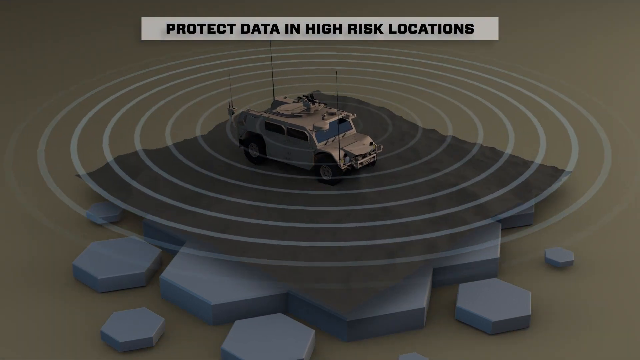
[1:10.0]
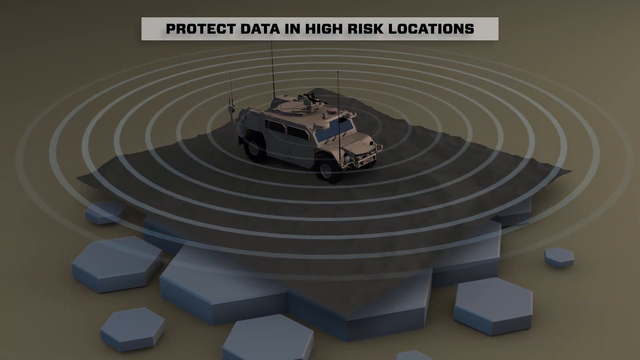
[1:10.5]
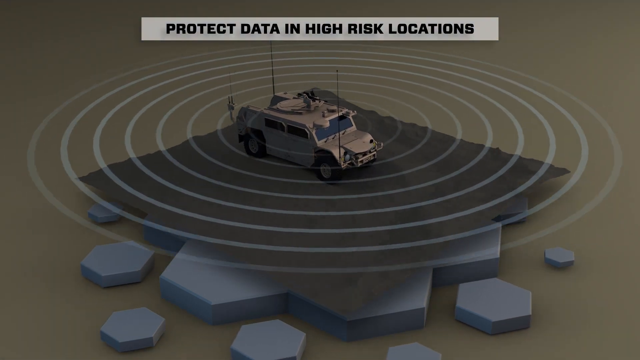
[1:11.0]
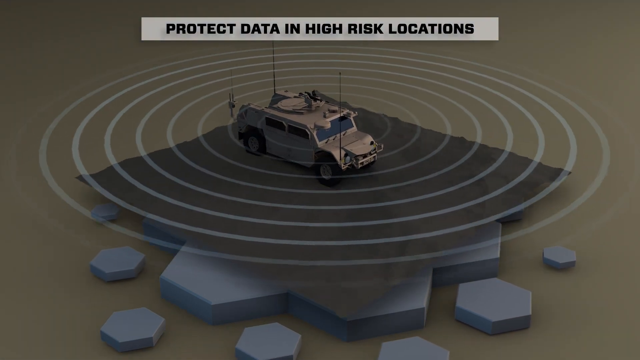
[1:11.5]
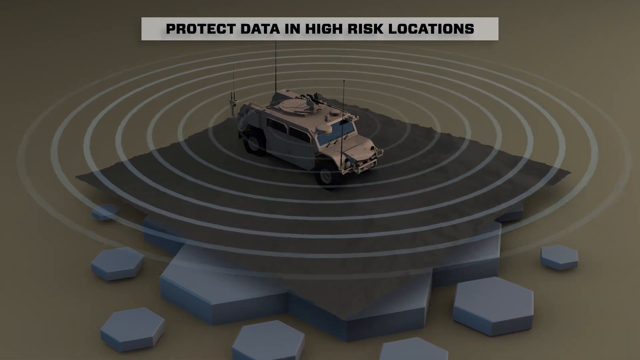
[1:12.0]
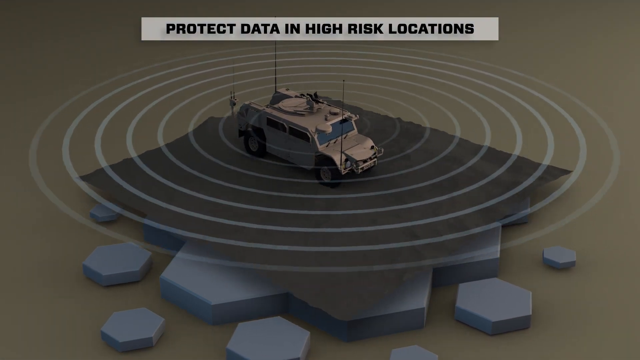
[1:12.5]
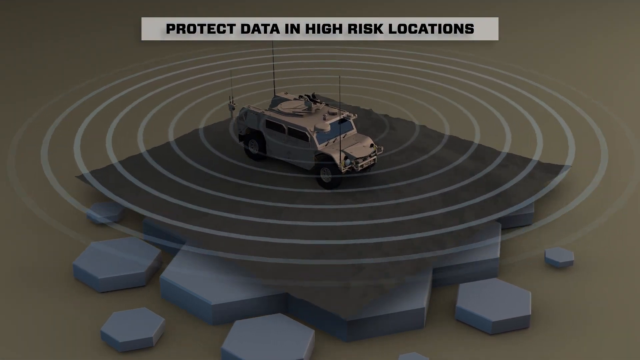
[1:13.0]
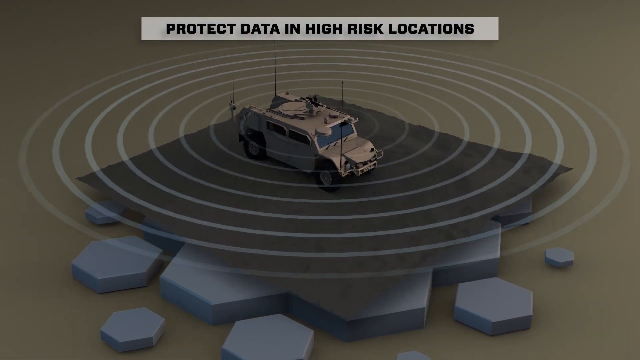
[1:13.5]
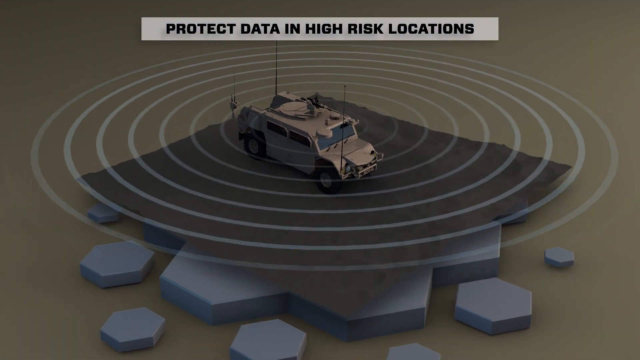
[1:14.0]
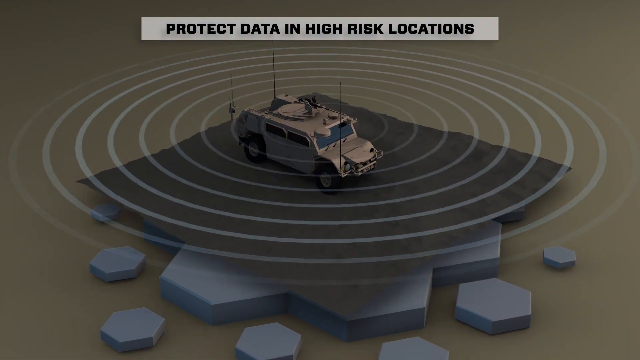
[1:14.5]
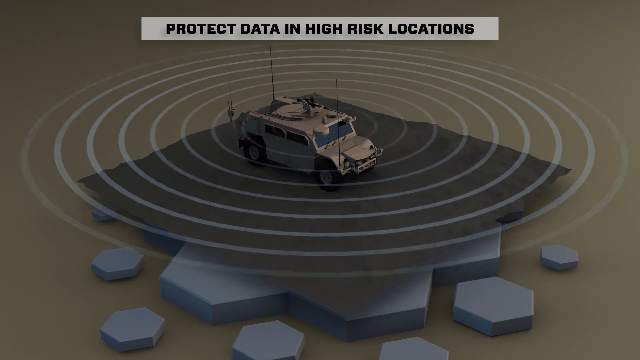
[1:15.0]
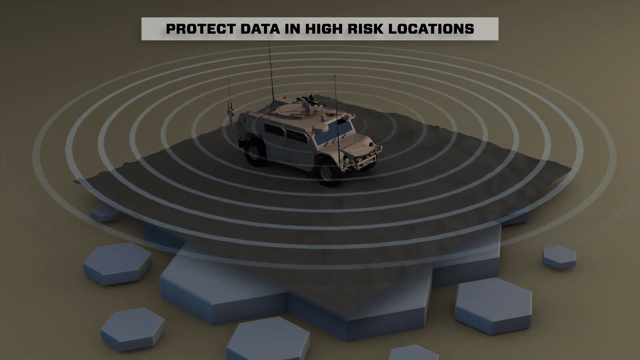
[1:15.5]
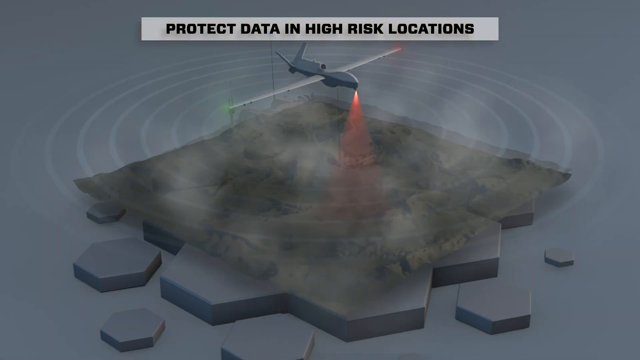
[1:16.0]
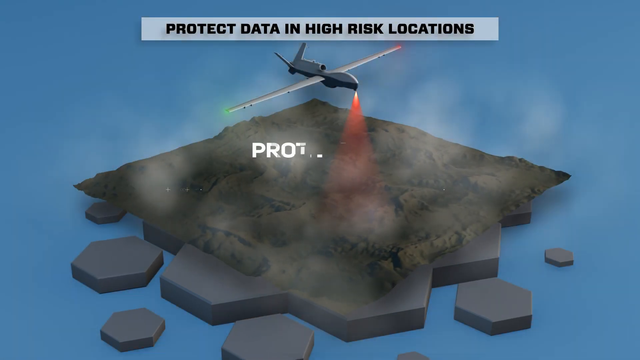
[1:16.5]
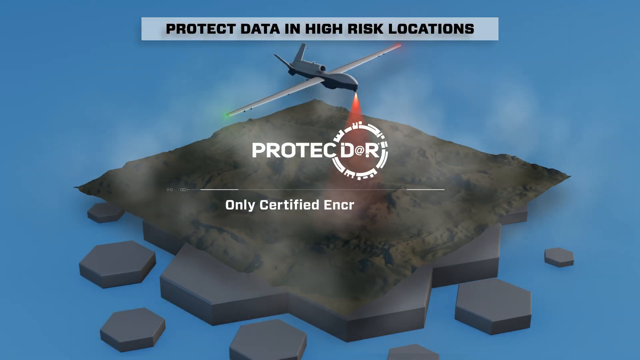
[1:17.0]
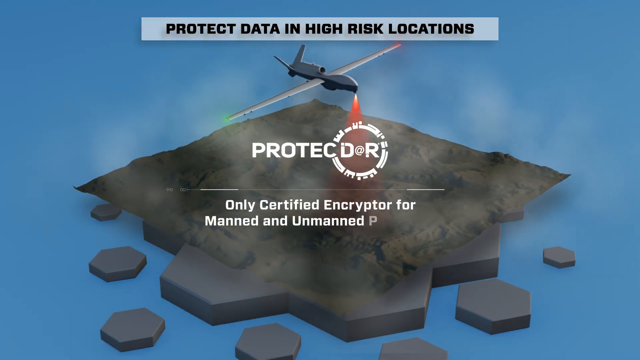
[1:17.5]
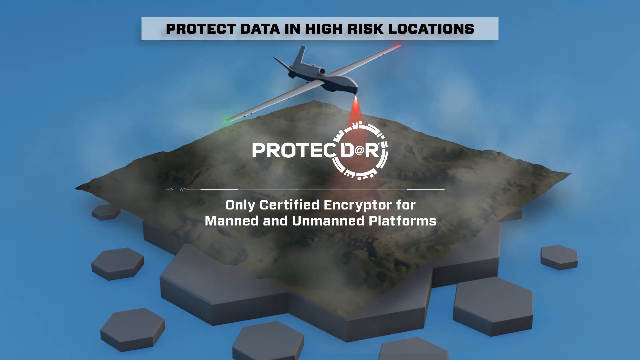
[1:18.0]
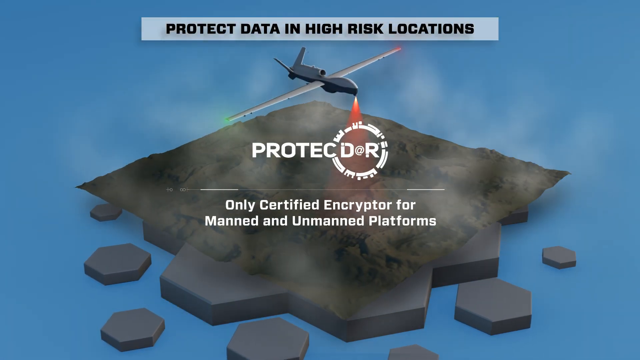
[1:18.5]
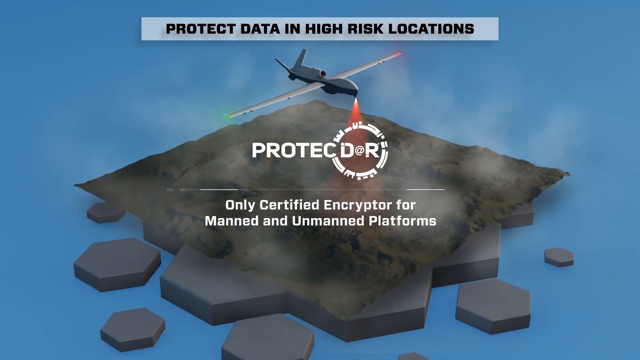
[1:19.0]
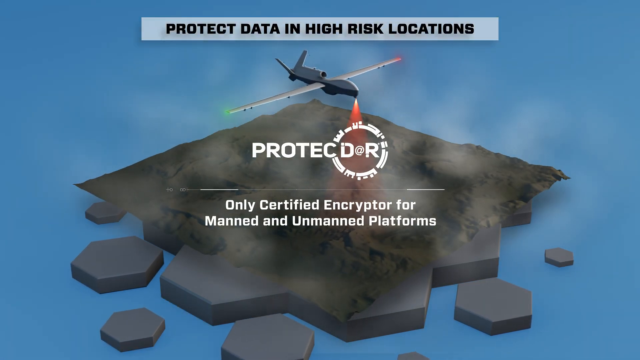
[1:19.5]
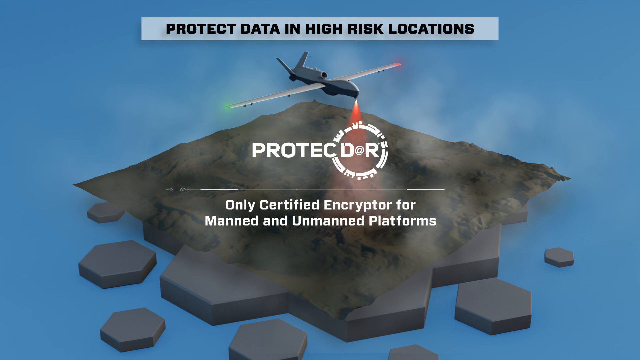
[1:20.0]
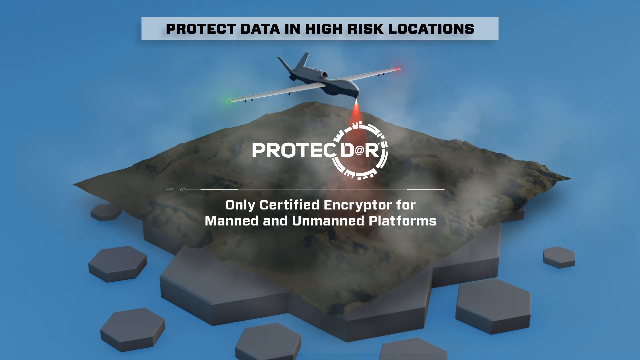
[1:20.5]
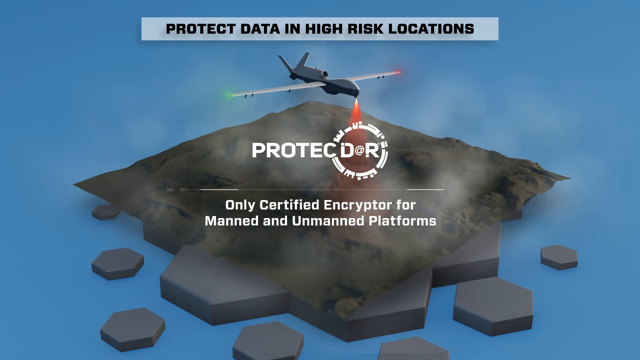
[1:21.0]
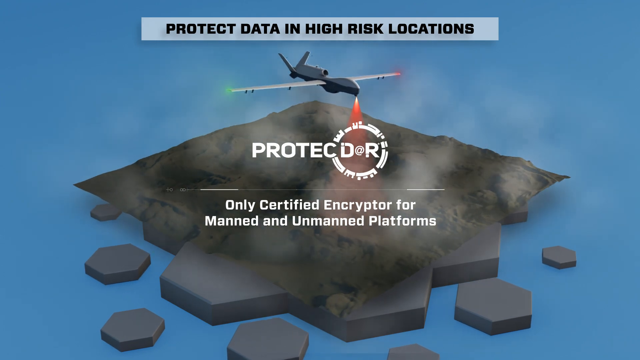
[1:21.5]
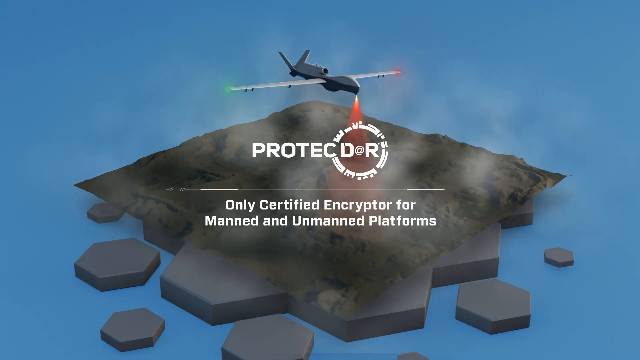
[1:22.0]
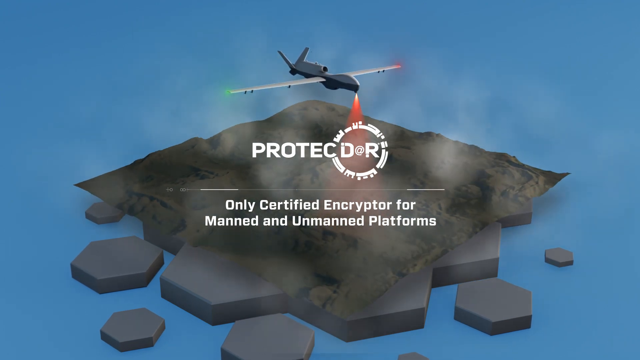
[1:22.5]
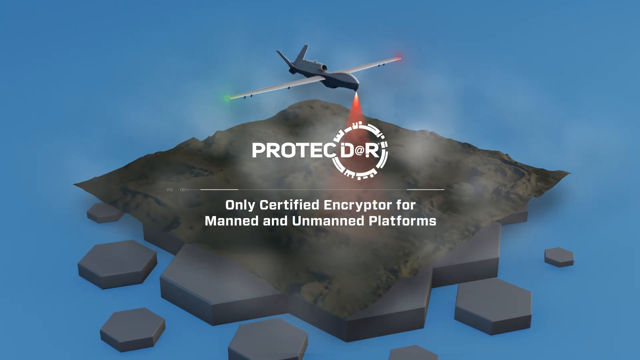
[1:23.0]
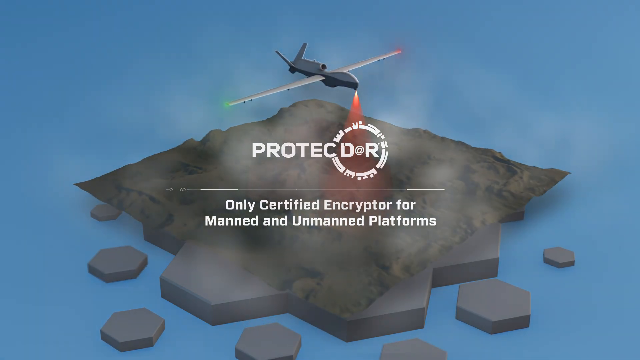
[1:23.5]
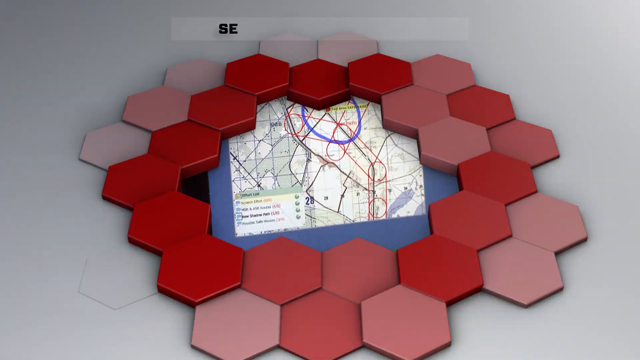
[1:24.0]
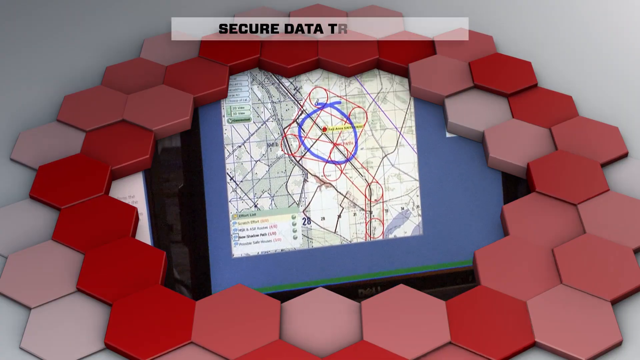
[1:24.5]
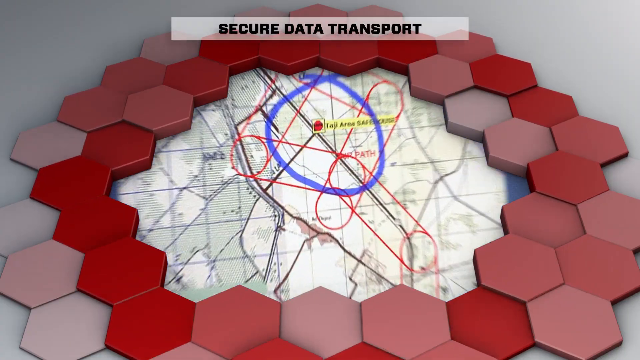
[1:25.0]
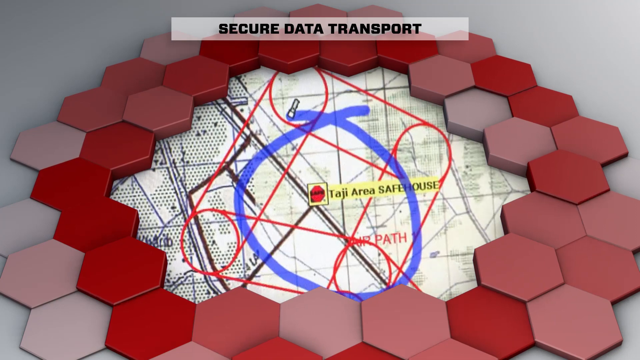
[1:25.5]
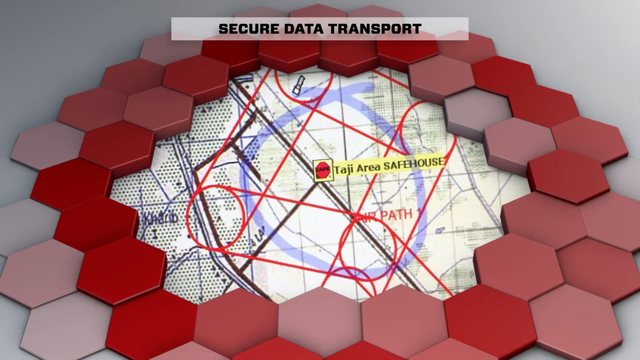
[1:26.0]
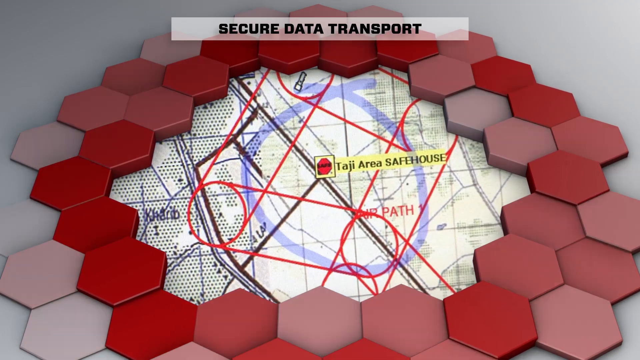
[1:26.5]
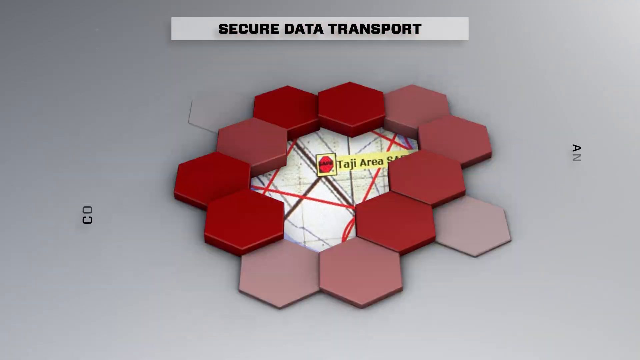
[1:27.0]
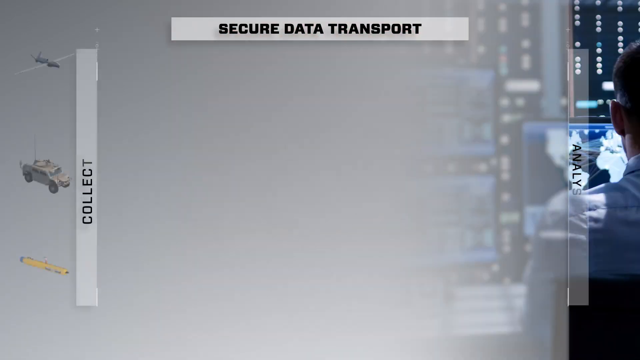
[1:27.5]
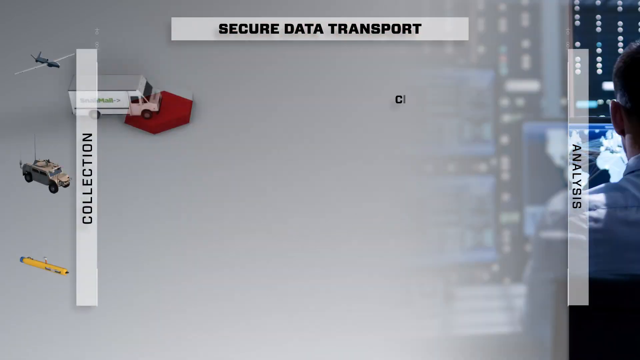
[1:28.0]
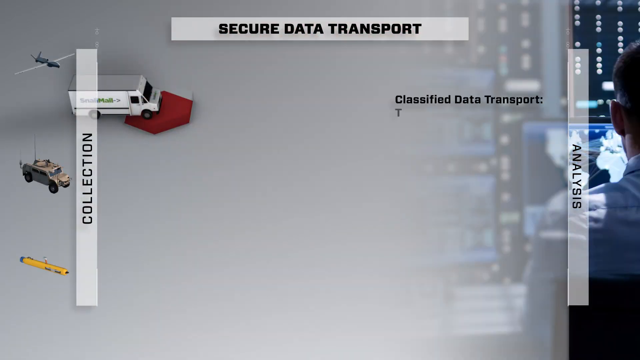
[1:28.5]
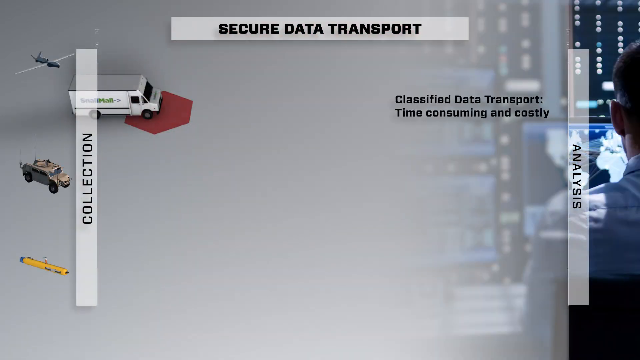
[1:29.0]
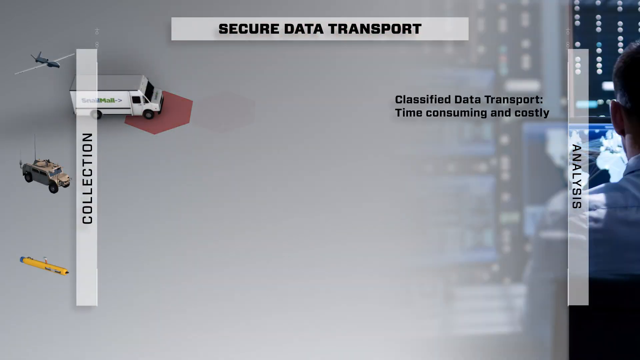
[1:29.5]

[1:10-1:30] The animation continues, showing information going from the Protect Door box to the Storage box. It then appears to transition to another graphic with the text "Protect Data in High-Risk Locations" at the top. This begins with a wavy blue and orange graphic, then transitions to a big brown military-looking truck emanating radar or wavy signals. After that, an airplane flies above some land with an orange light, kind of monitoring and scanning the land. The land is a very rocky, bulky-looking setting shaped like a square, an animated sample area beneath the airplane.